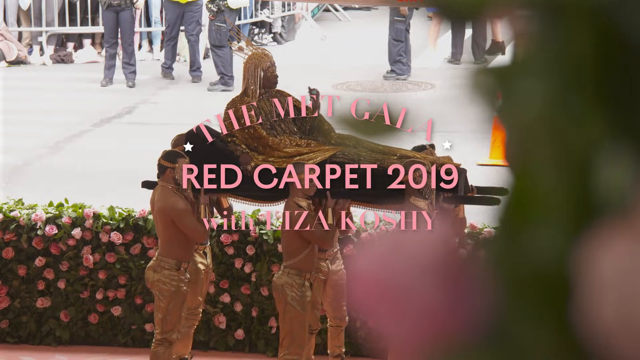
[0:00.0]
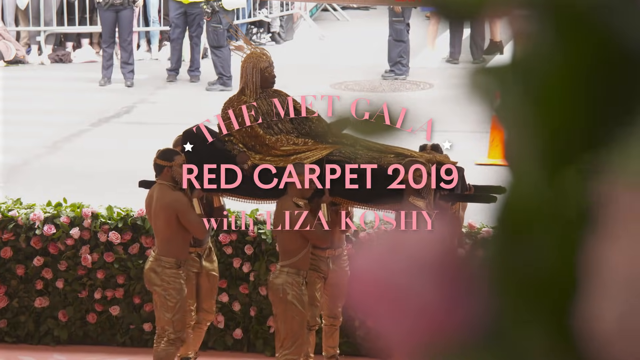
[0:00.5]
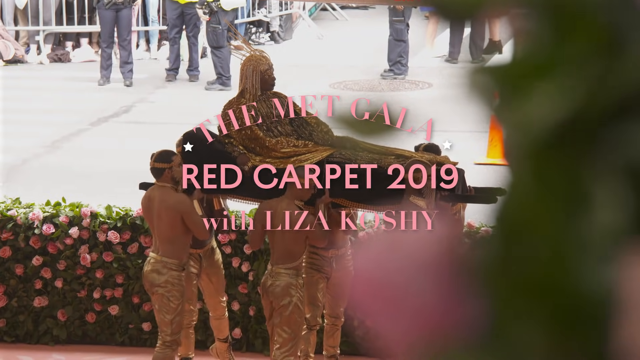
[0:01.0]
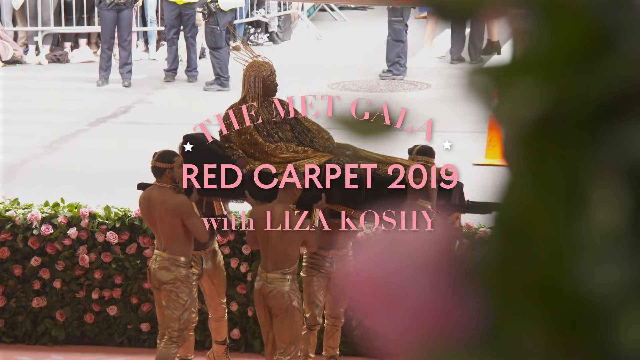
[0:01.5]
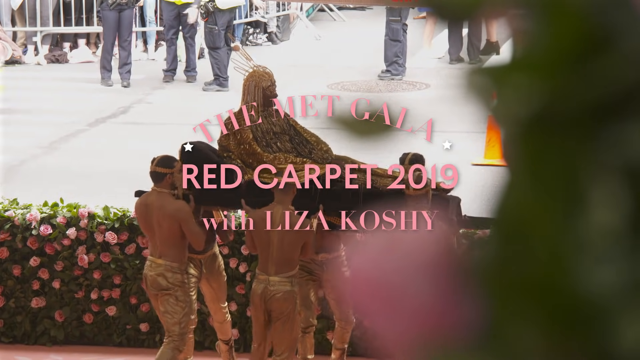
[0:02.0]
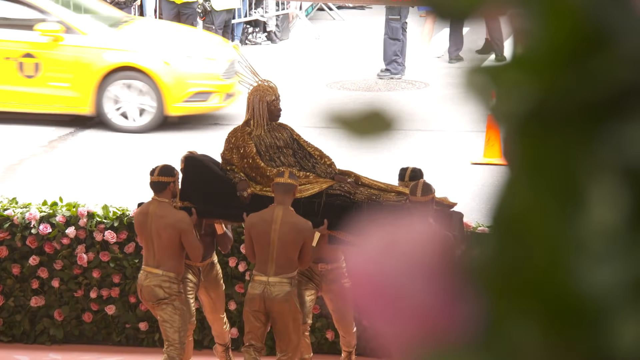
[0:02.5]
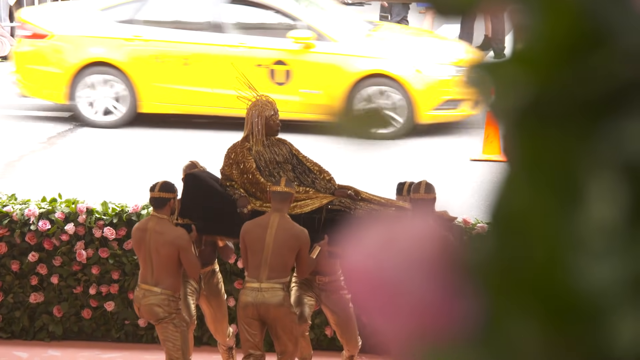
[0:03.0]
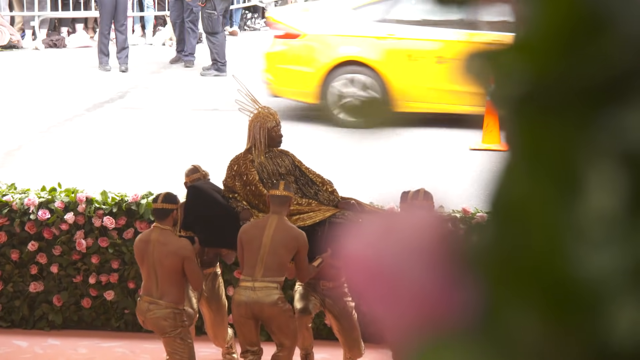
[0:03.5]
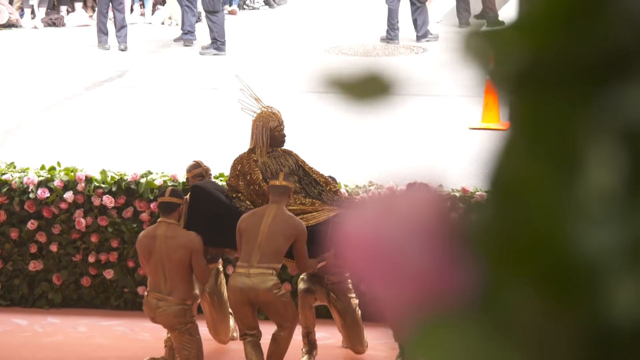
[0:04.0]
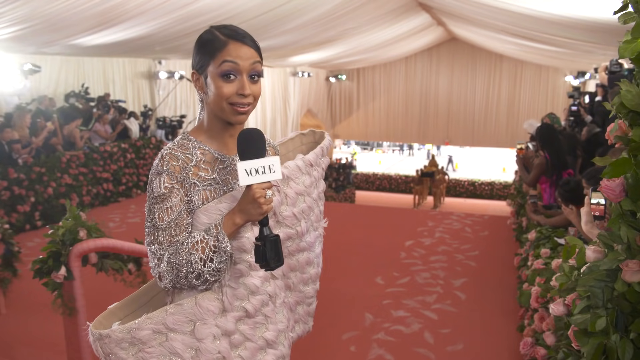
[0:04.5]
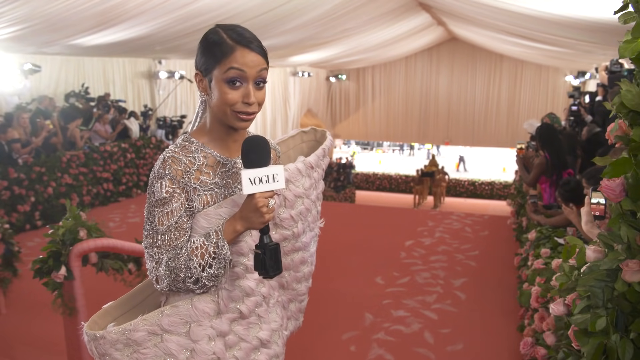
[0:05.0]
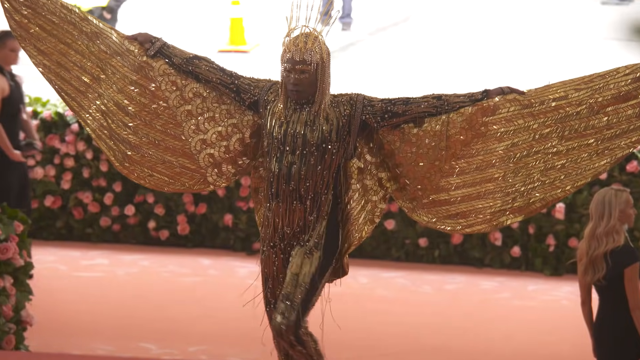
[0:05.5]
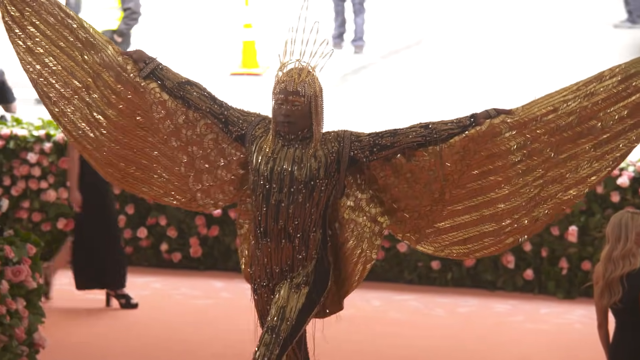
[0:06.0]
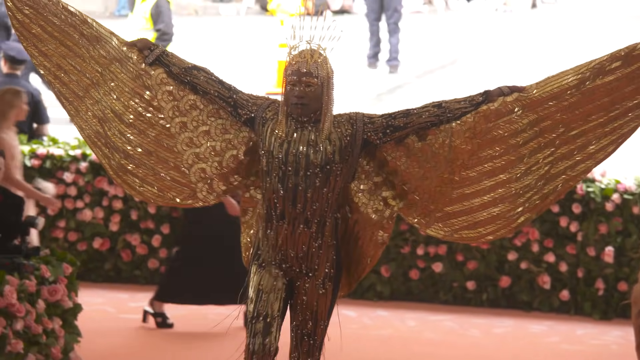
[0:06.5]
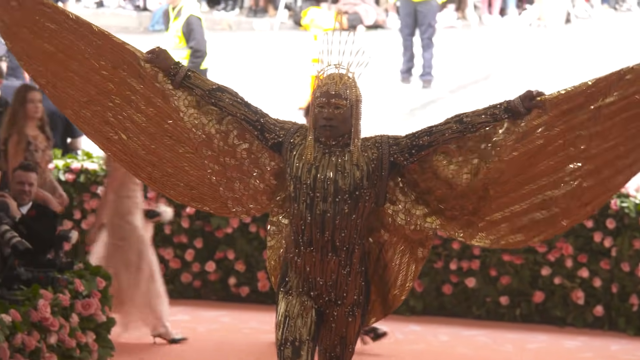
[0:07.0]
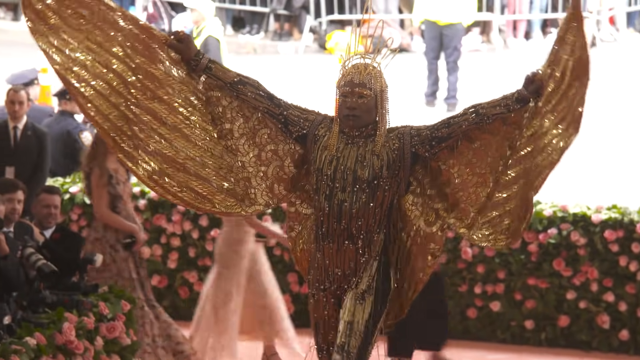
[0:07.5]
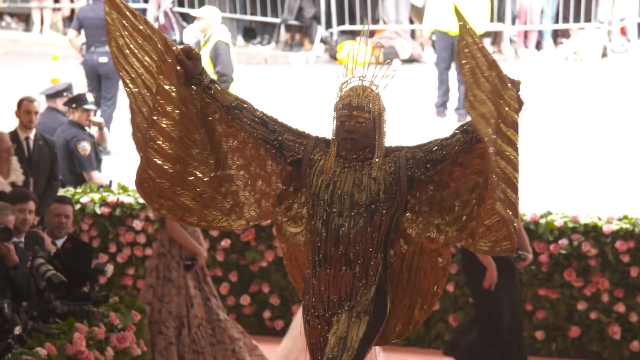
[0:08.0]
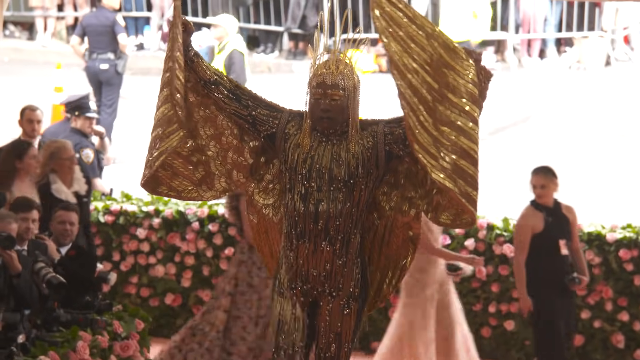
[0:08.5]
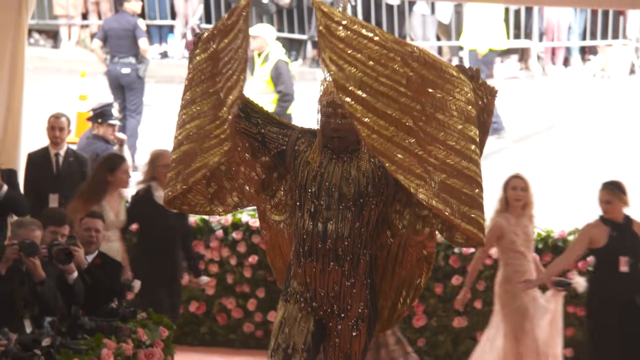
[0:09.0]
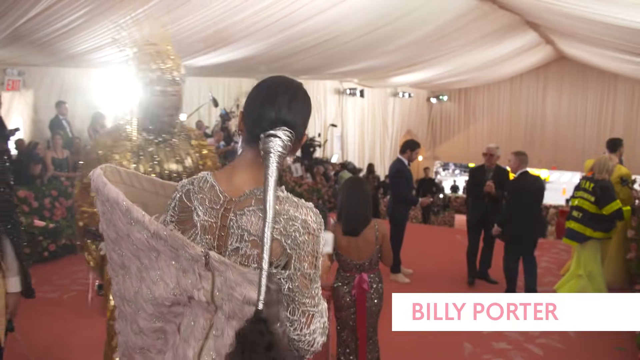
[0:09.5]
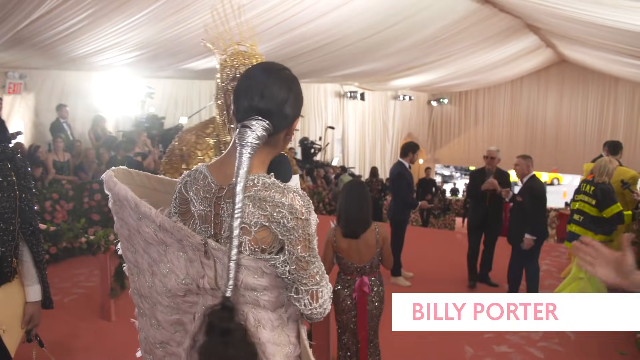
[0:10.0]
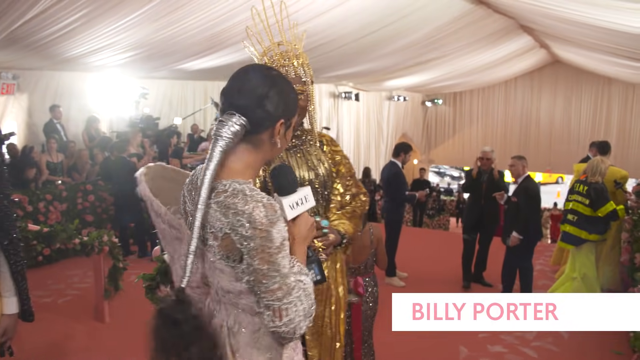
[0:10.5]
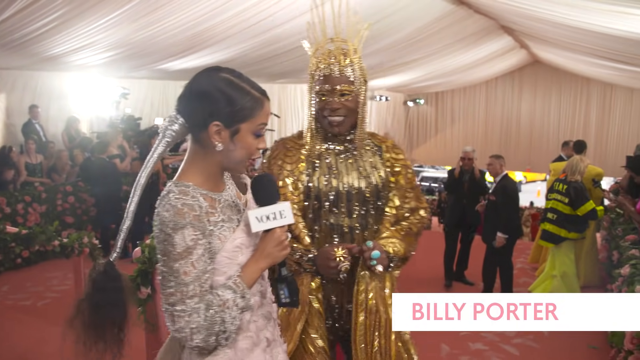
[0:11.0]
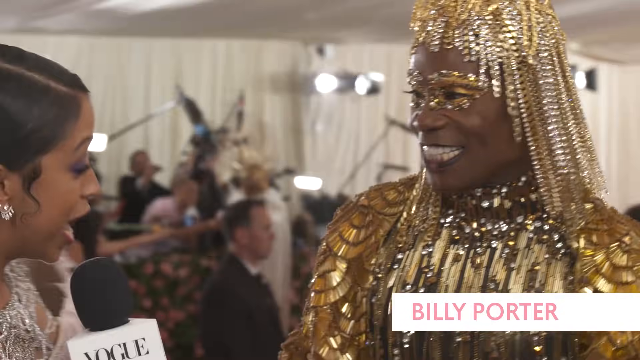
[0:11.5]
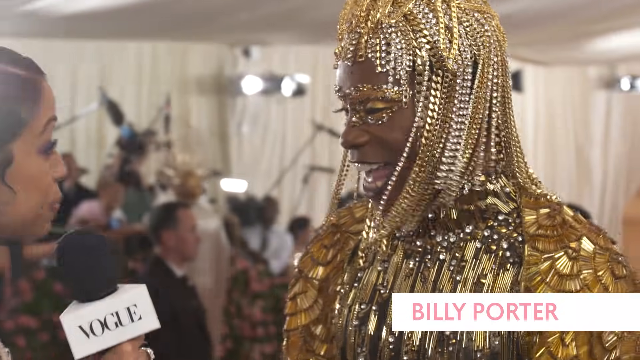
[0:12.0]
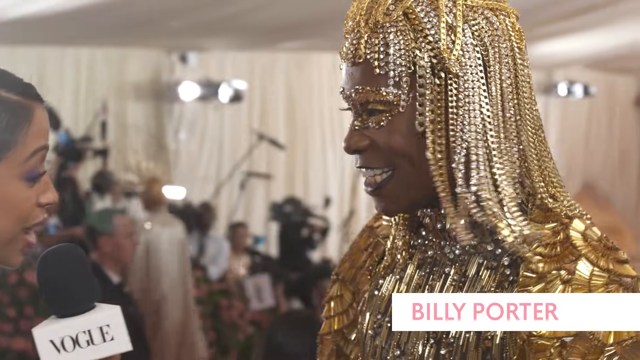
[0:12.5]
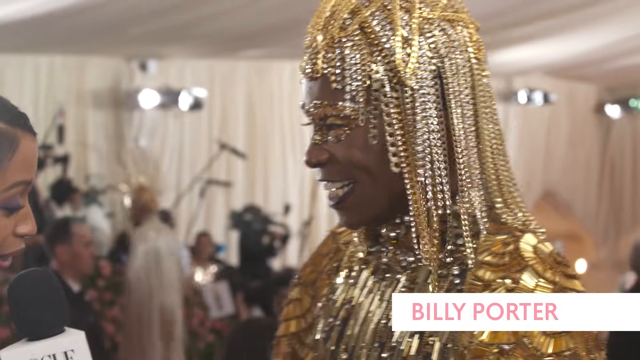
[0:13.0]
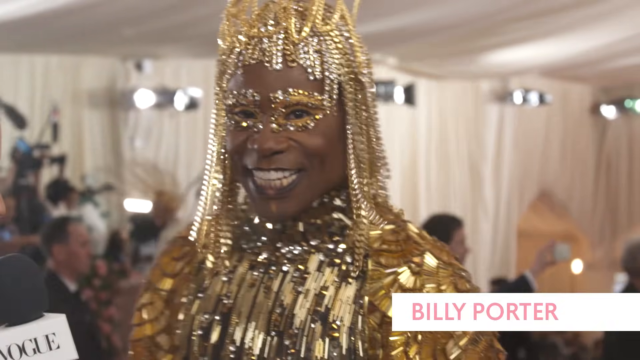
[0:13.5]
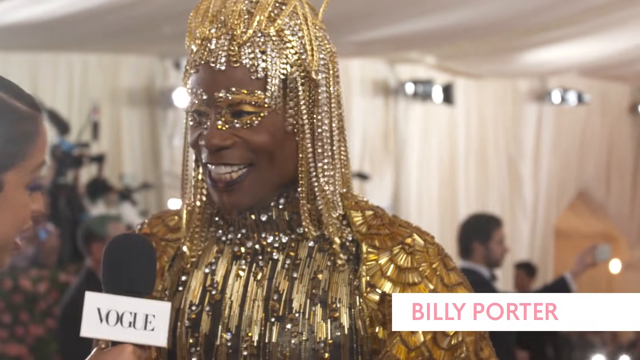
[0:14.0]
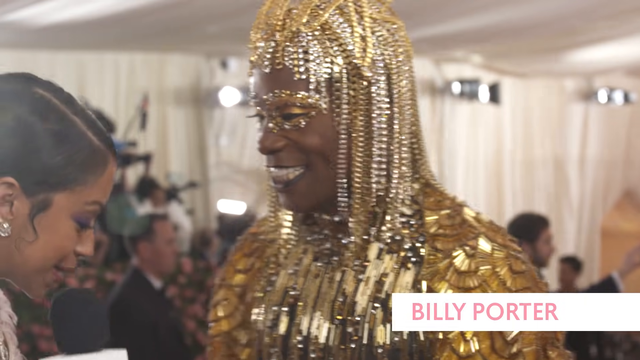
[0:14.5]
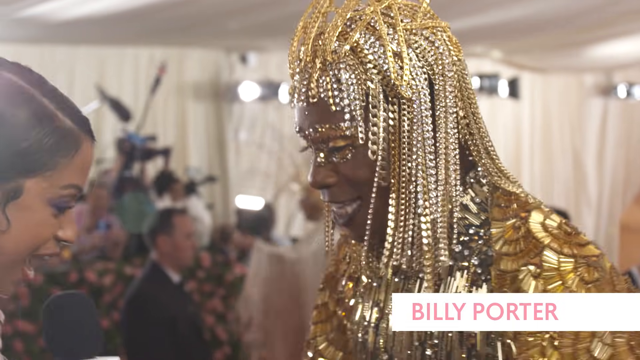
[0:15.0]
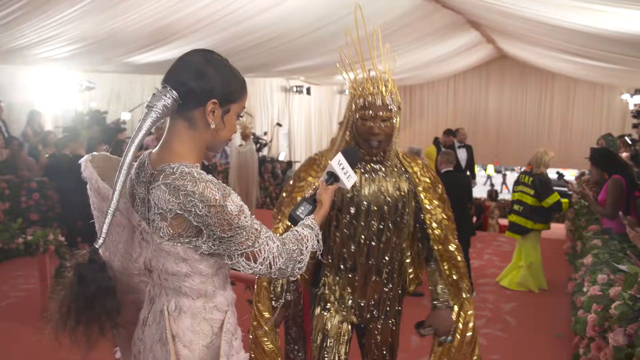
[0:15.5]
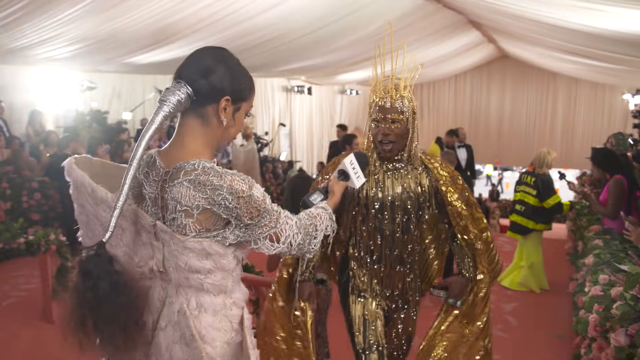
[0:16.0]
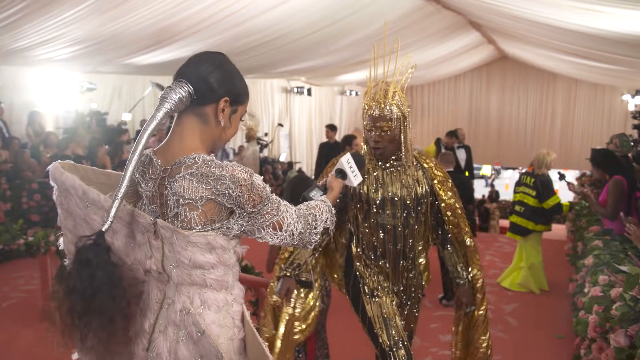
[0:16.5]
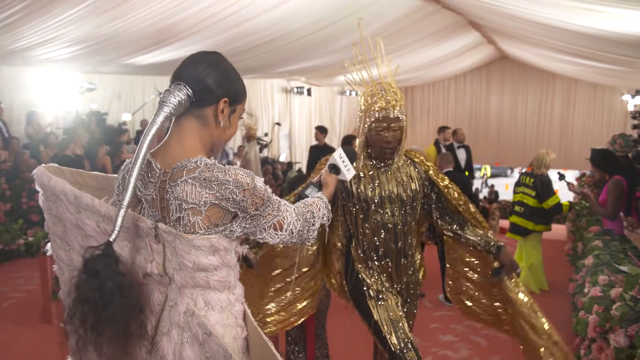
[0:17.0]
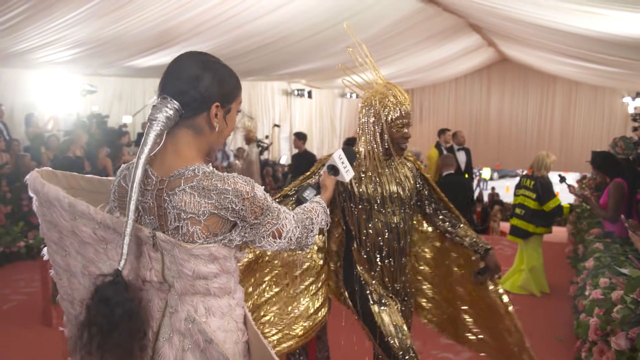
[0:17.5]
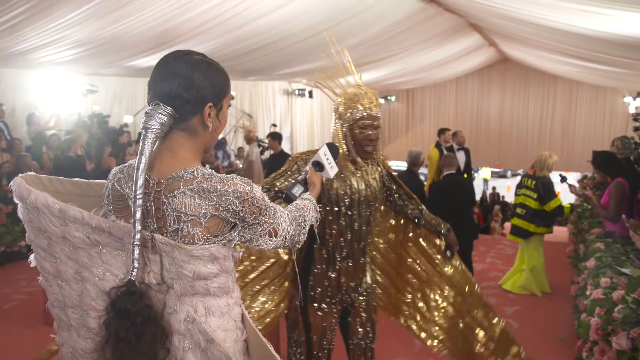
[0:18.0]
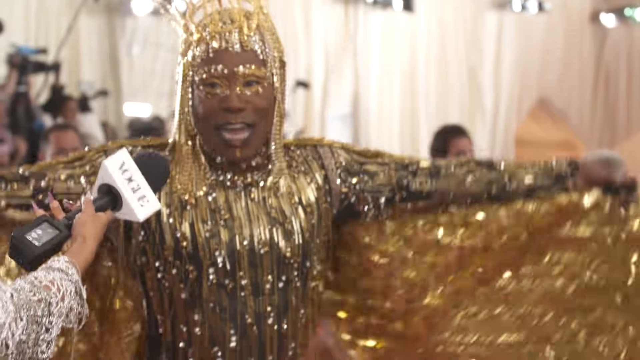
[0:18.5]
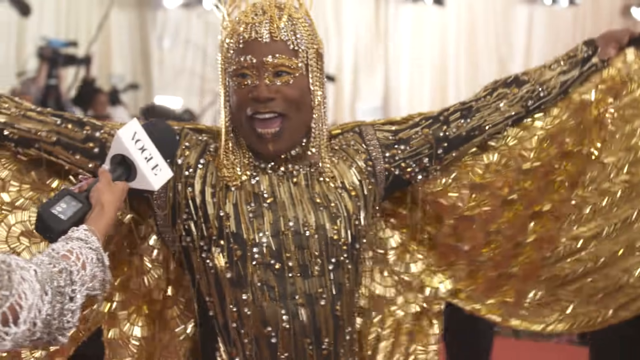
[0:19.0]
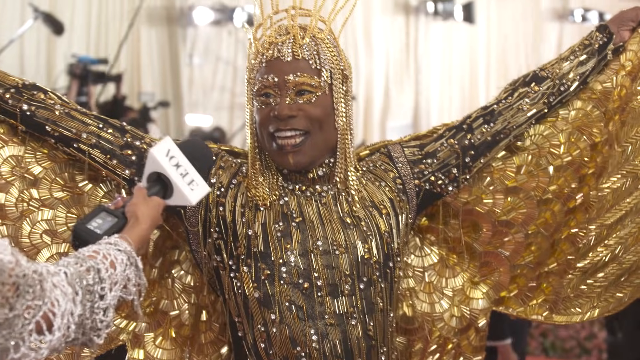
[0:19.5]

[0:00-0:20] A celebrity makes a grand entrance onto the Met Gala red carpet, draped in a gold outfit and crowned with a headdress embellished with metal gold beading. The celebrity is carried by six men, three on each side, beneath the sleigh they carry, and sits on top of the sleigh with back erect, looking straight ahead at the camera. The figure first appears in the background and approaches the foreground, then emerges from being carried by the six men. With arms spread out, the celebrity shows the wingspan of the outfit, a gold metal bird outfit that looks like a metal gold bird of prey, and stands in a pose for the photographers to take pictures. Underneath is a black bodysuit adorned with gold metal accessories. The celebrity is Billy Porter, and the words "Billy Porter" appear toward the bottom of the screen. As he approaches the person interviewing him, his makeup is visible: his eye makeup is various shades of gold metallic, with a light gold metallic on the lid, a darker, more bronzy gold metallic in the crease, and a highlight of light gold metallic. His eyebrows are adorned with gold accessories that look like individual sequins. He smiles, raises his wings up again, and continues to talk to the interviewer.